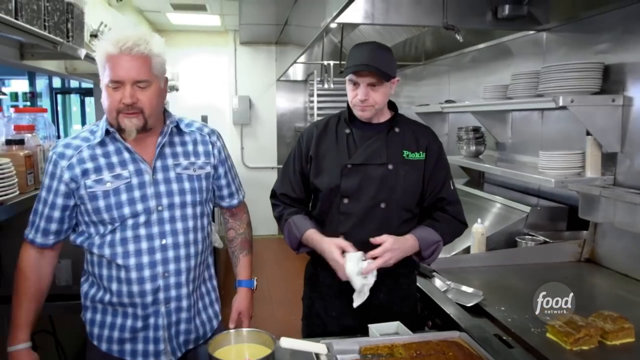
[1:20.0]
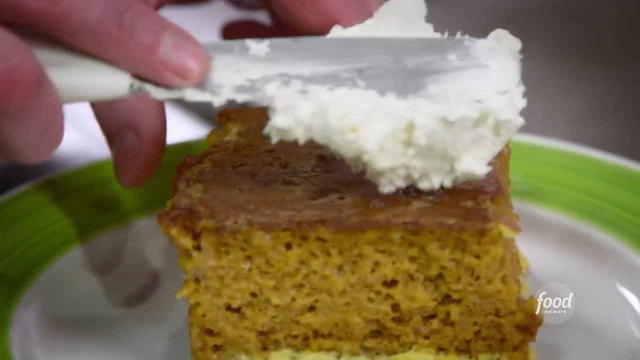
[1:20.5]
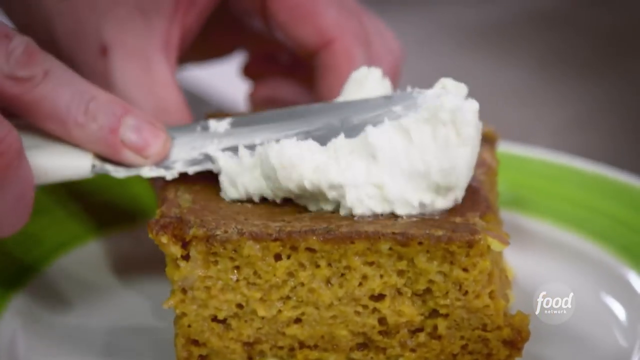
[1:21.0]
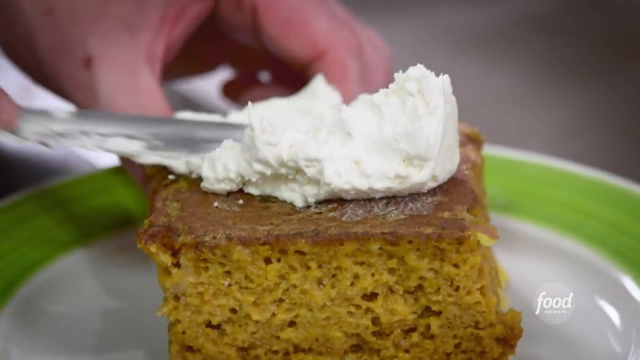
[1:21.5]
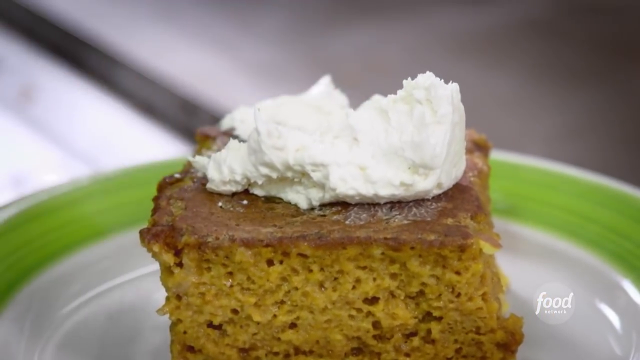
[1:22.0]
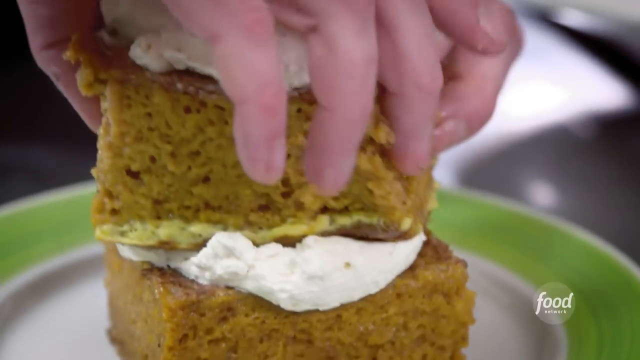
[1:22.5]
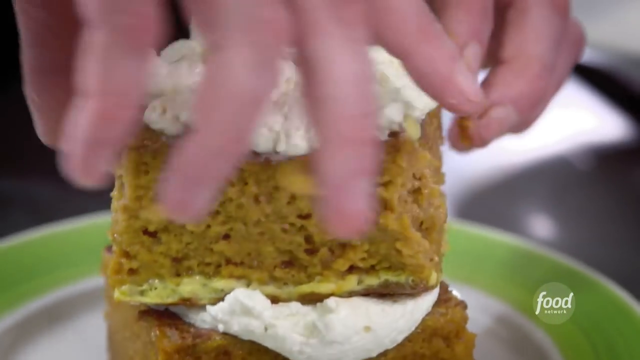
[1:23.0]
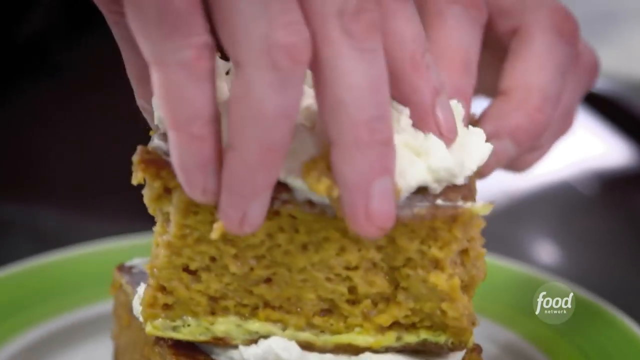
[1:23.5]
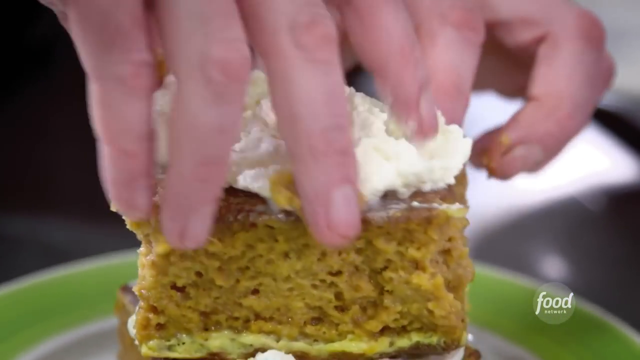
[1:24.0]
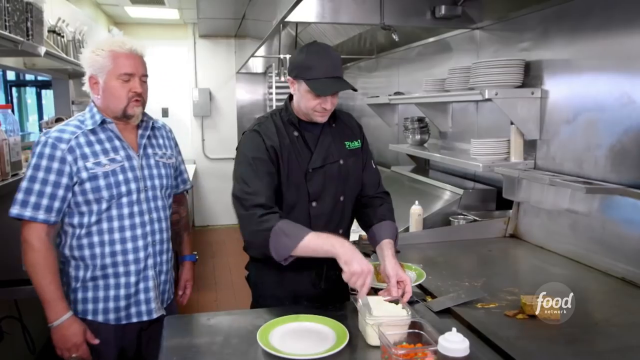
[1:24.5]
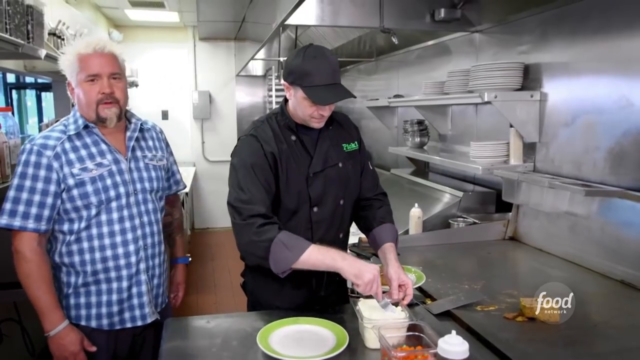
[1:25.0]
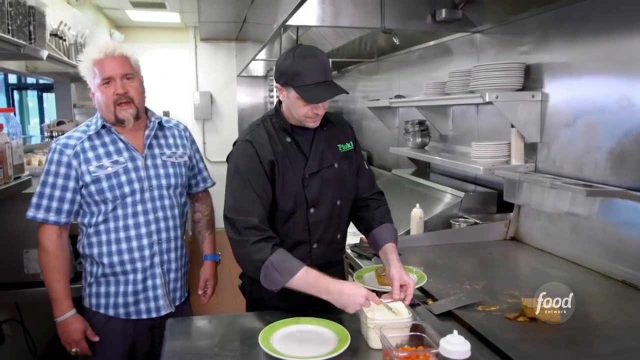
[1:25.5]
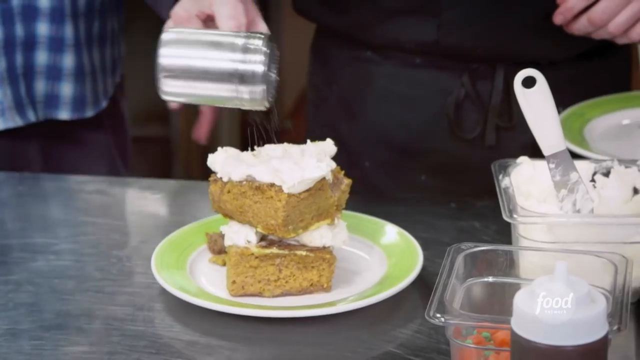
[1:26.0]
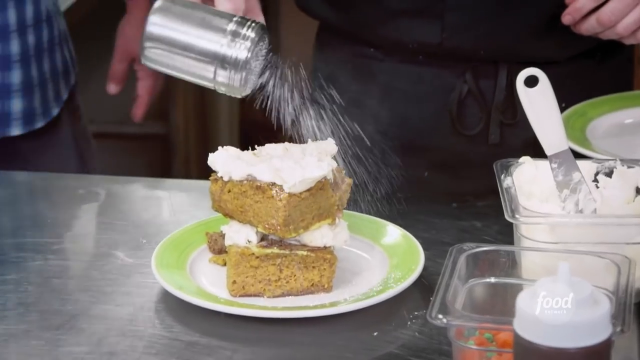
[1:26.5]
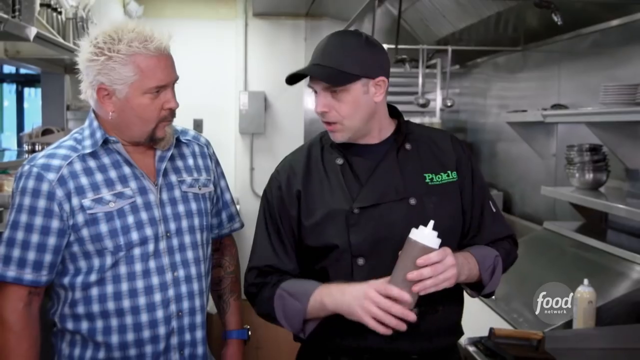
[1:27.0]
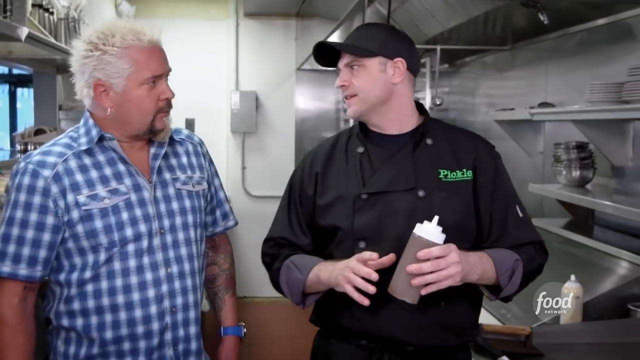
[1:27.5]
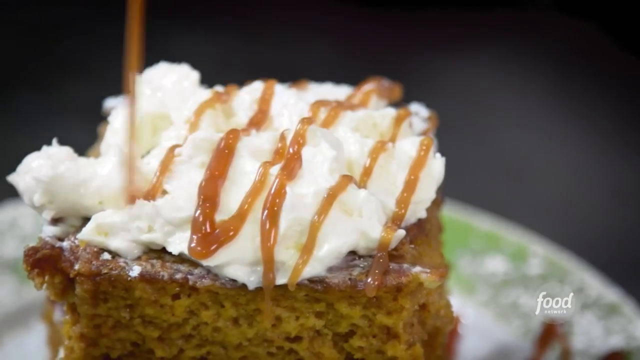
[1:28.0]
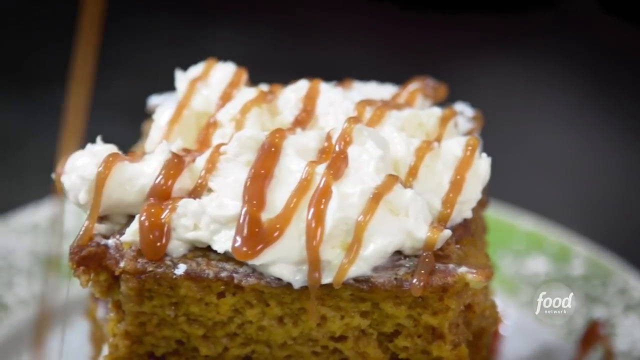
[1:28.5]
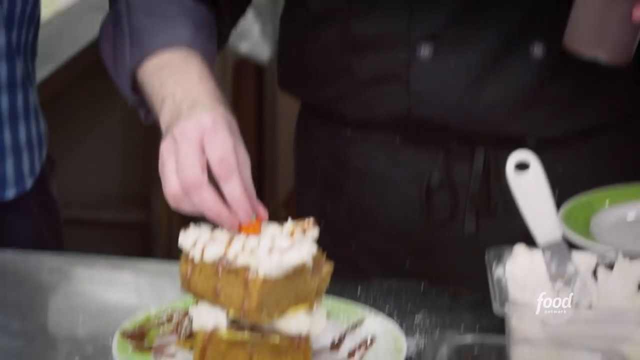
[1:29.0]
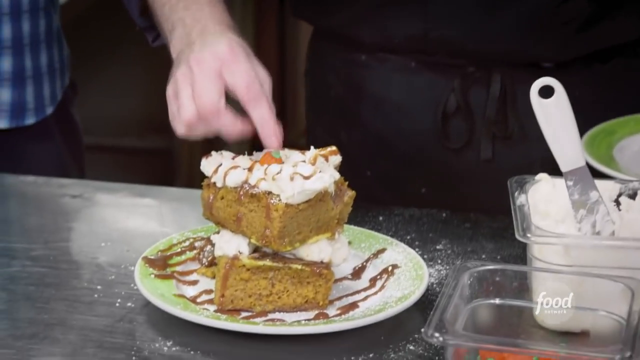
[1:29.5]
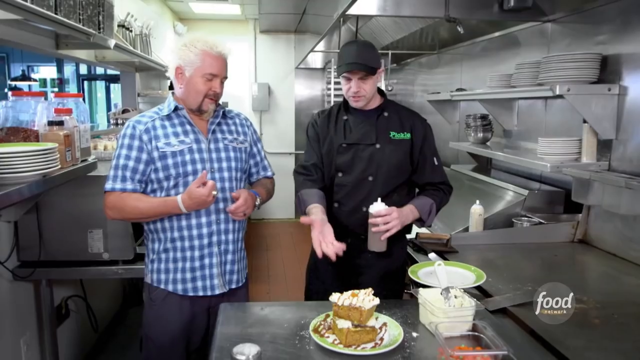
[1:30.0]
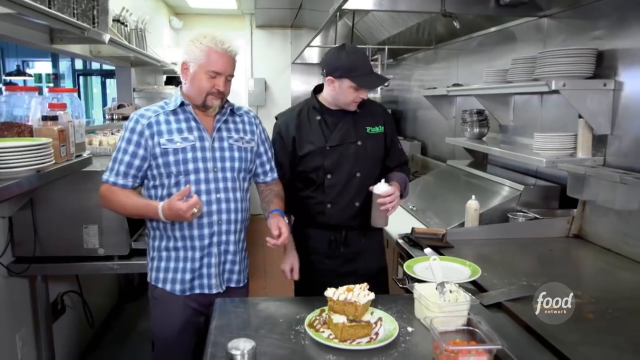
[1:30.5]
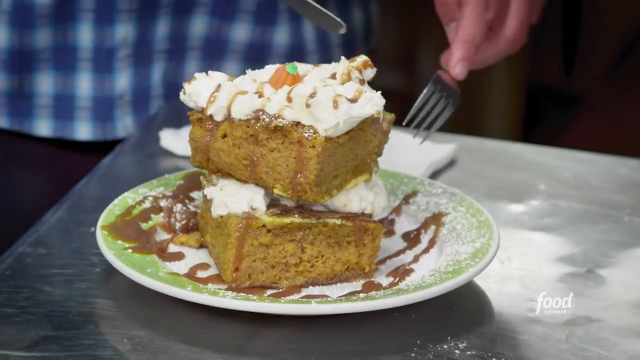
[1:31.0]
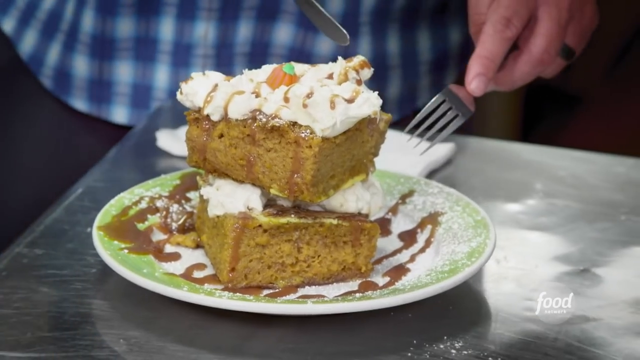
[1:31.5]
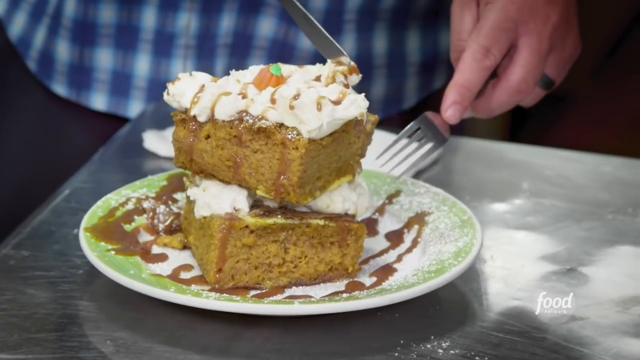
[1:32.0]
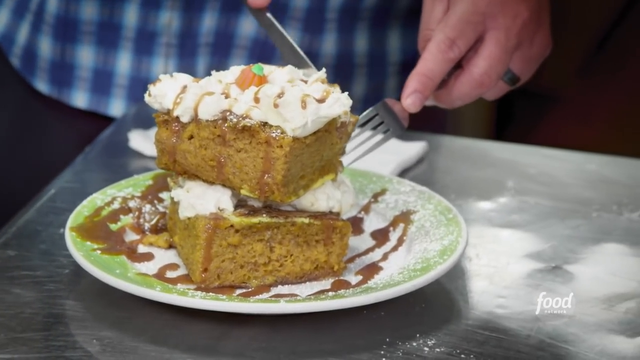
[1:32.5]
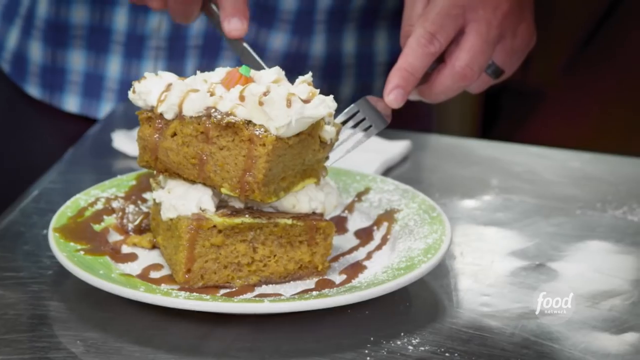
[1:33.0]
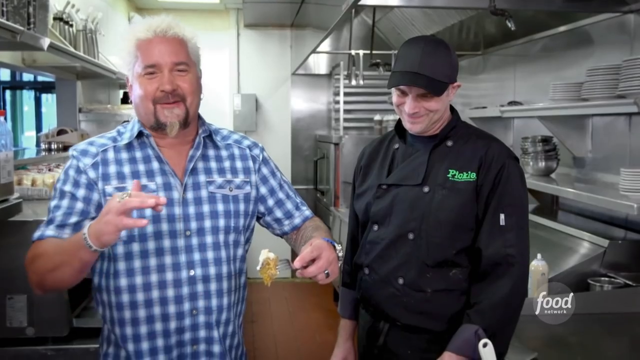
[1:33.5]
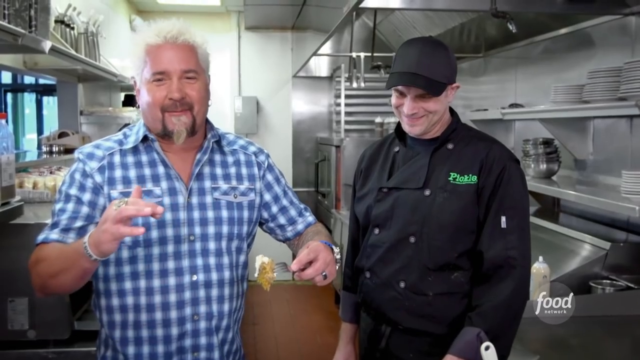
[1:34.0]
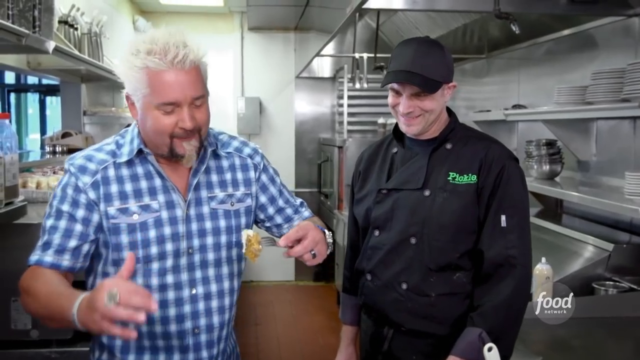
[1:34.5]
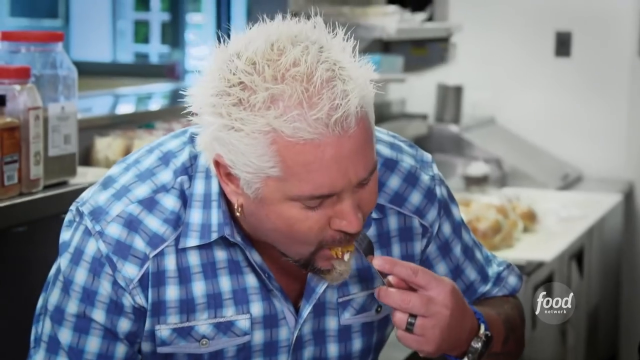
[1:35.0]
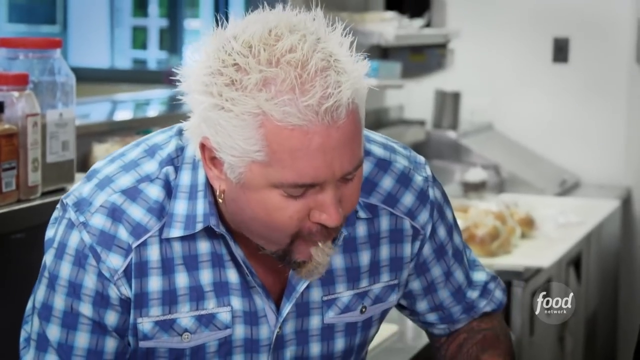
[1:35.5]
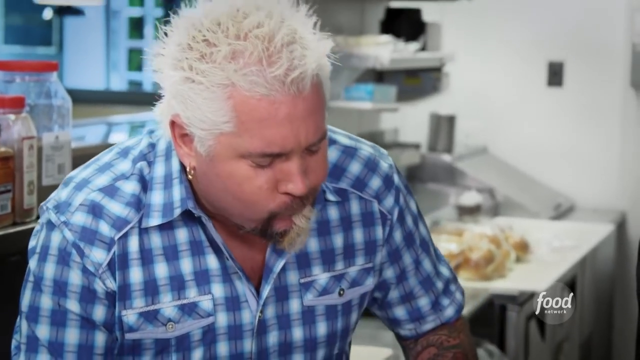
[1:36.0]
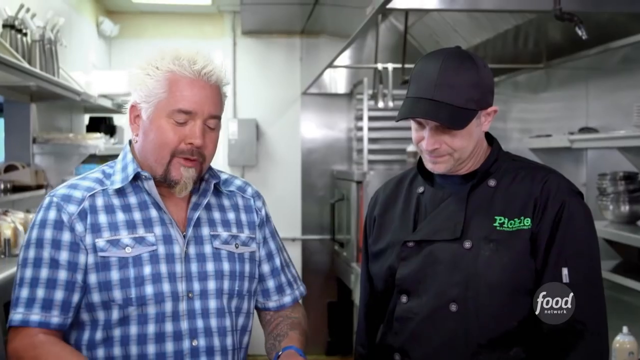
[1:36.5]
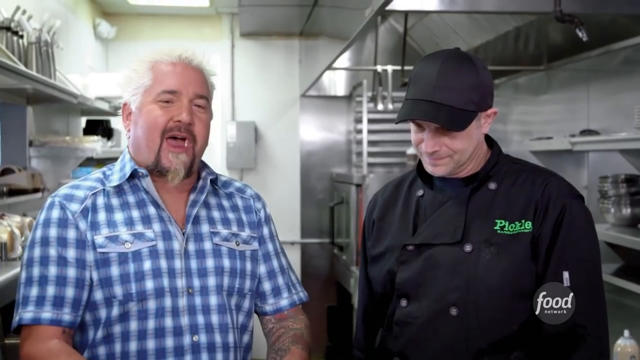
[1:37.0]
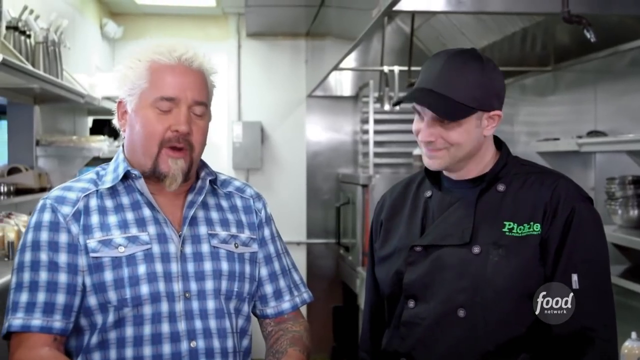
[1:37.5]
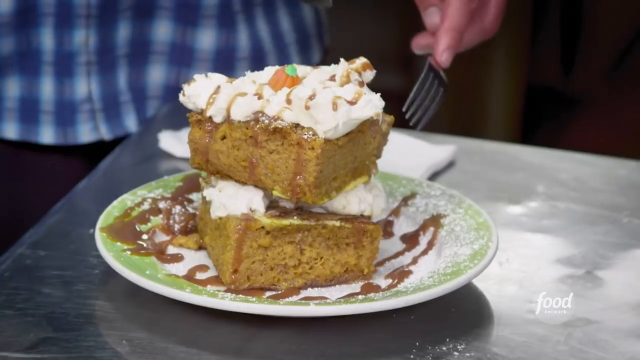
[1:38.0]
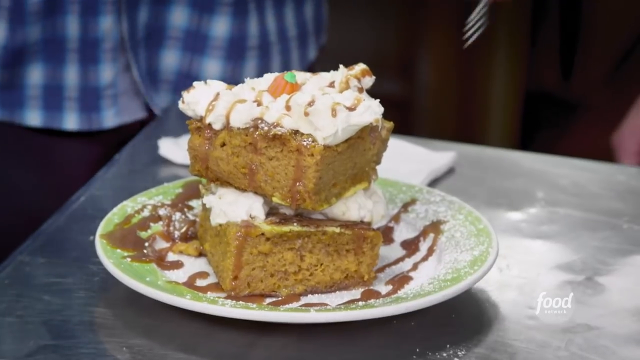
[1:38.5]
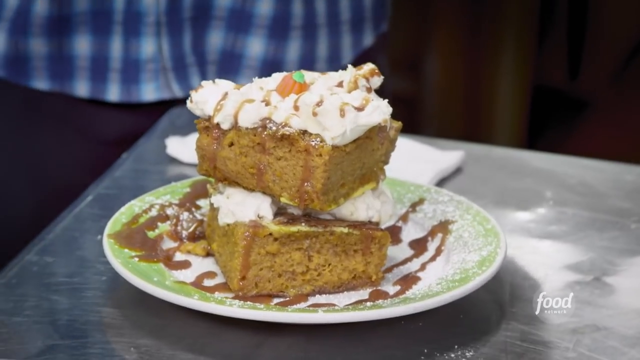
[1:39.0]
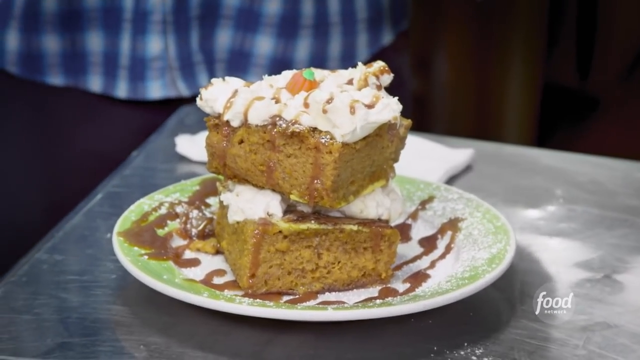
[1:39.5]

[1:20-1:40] In the kitchen of the restaurant Pickle, Guy Fieri stacks up loaves of the confection. What seems to be a buttercream-type frosting is put on, powdered sugar is sprinkled over it, and caramel is drizzled in a zigzag pattern. What looks like a marzipan carrot is placed on the very top, though no carrots or carrot shavings are seen going into the recipe. Guy Fieri seems to love it. His hair is not especially wild, and he wears a bluish checkered plaid shirt. The chef, who sort of resembles John Malkovich, builds the cake for Guy Fieri as his guest.